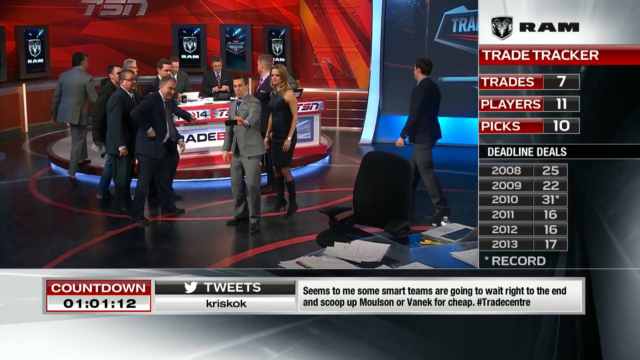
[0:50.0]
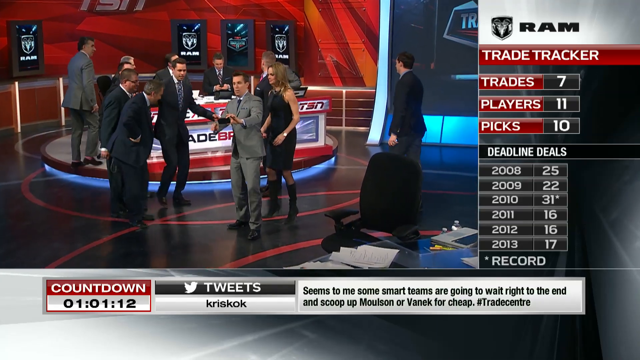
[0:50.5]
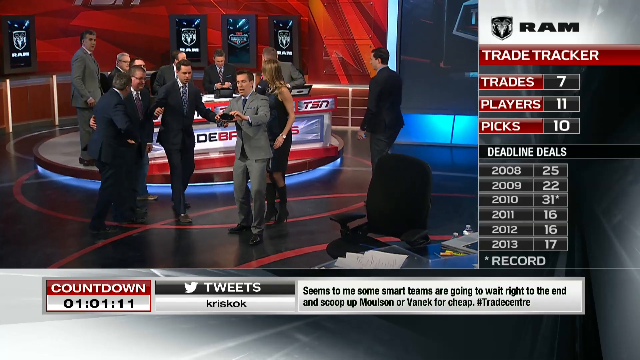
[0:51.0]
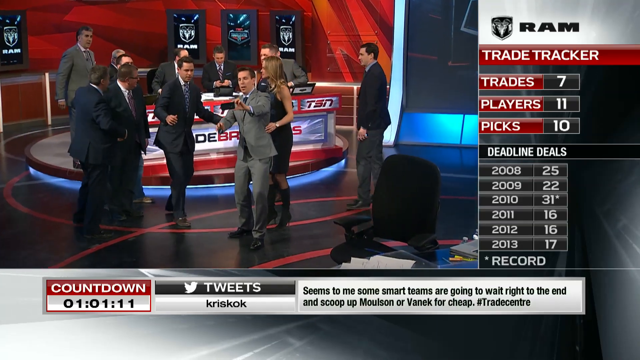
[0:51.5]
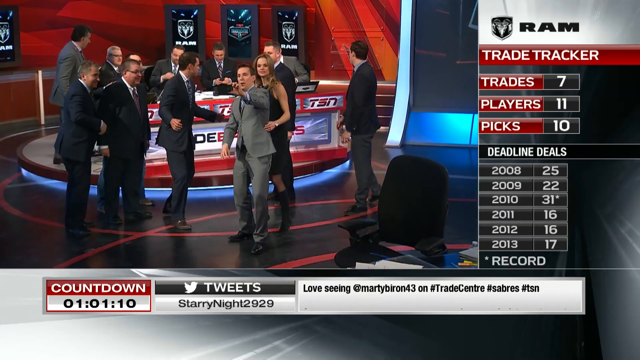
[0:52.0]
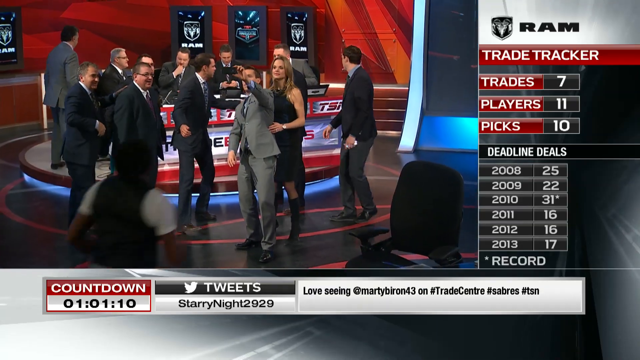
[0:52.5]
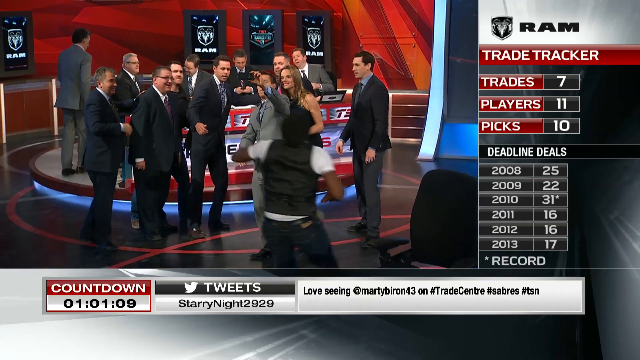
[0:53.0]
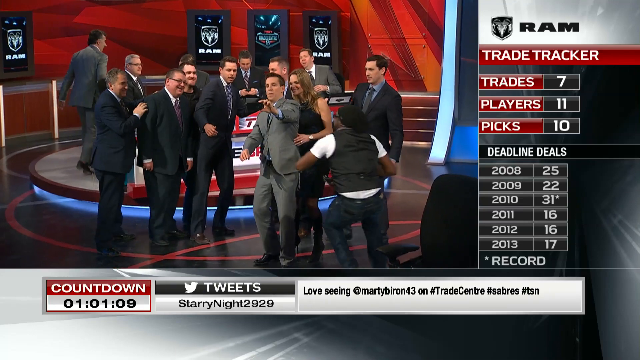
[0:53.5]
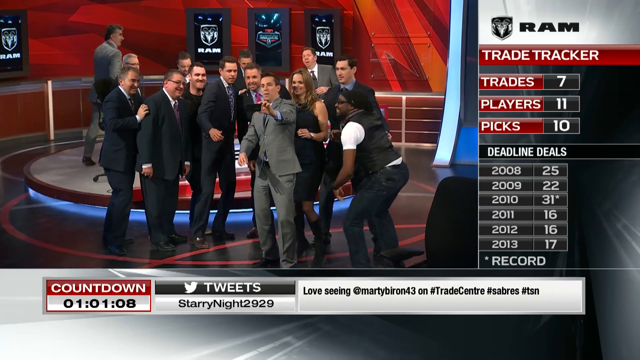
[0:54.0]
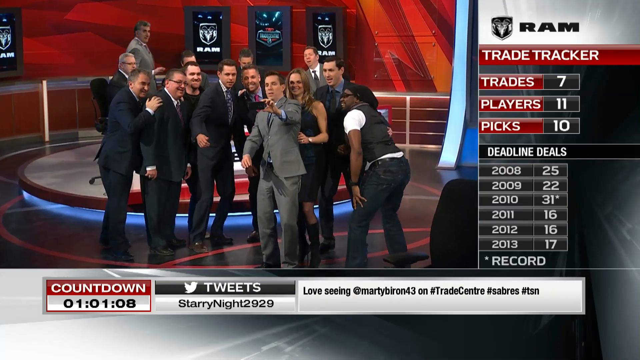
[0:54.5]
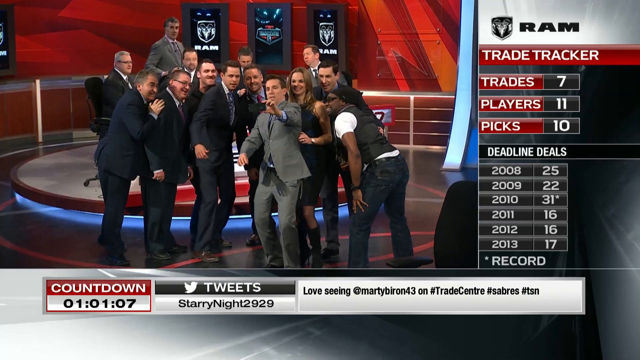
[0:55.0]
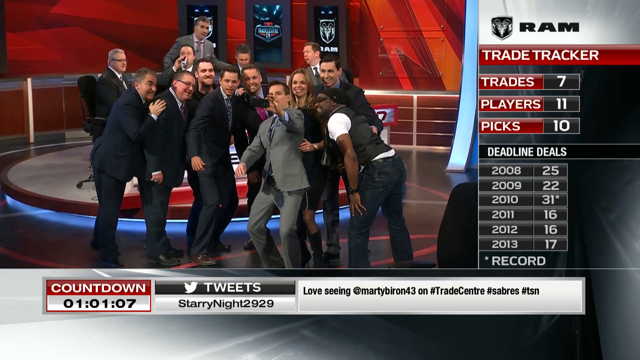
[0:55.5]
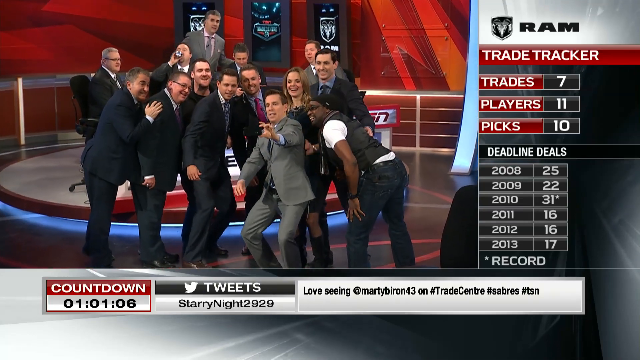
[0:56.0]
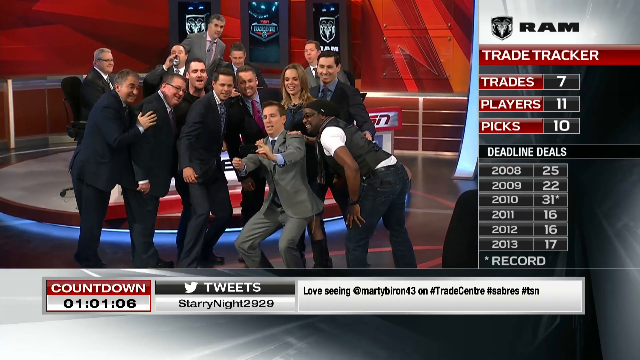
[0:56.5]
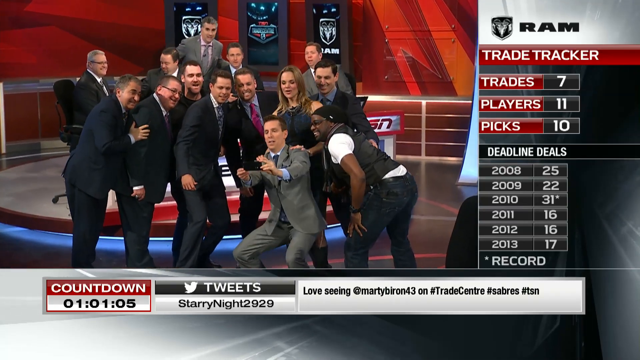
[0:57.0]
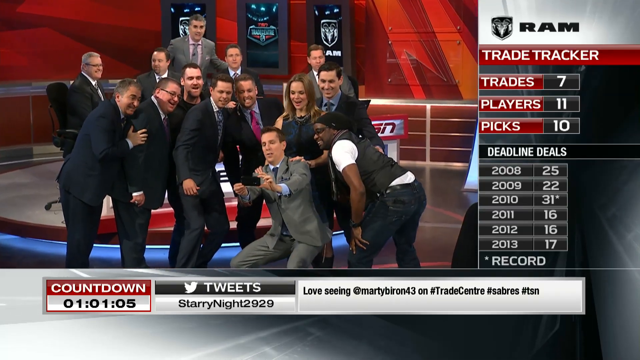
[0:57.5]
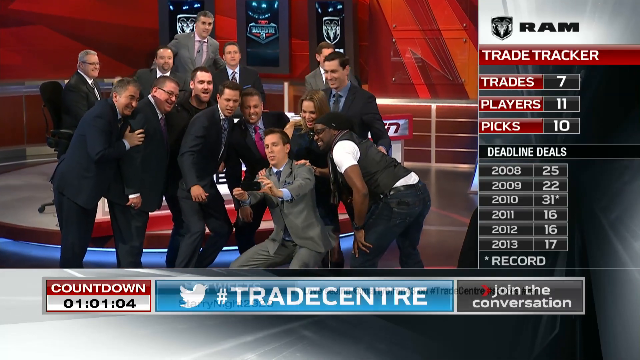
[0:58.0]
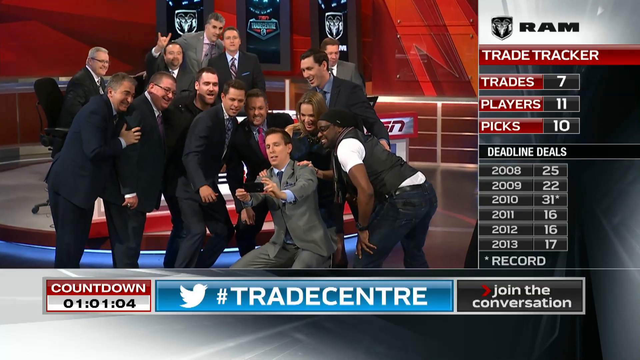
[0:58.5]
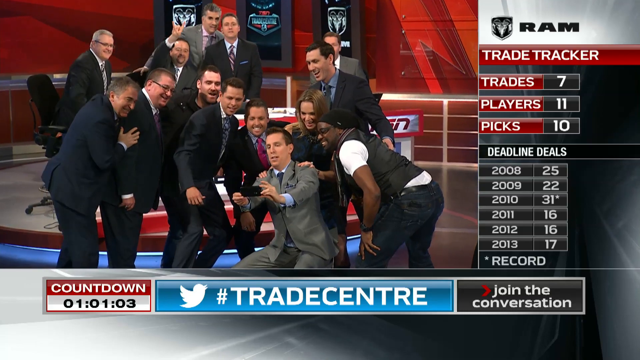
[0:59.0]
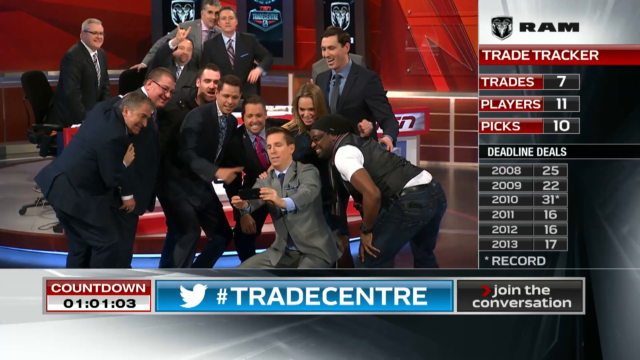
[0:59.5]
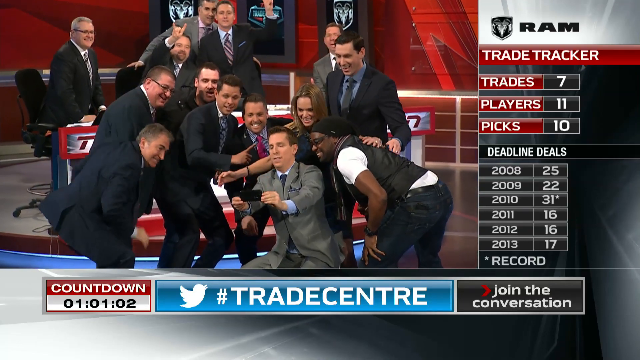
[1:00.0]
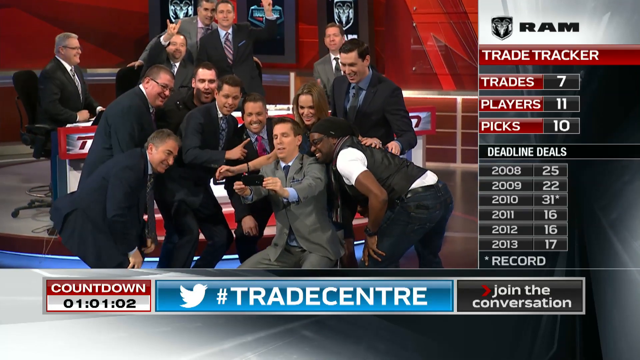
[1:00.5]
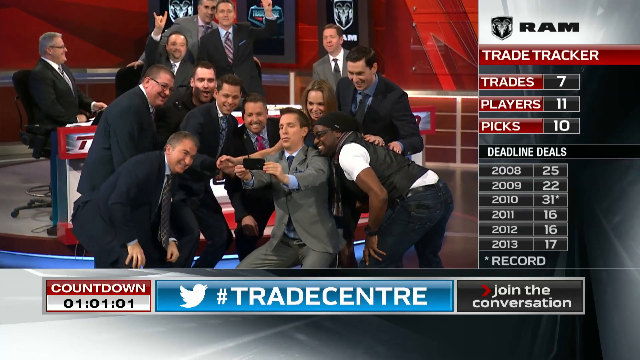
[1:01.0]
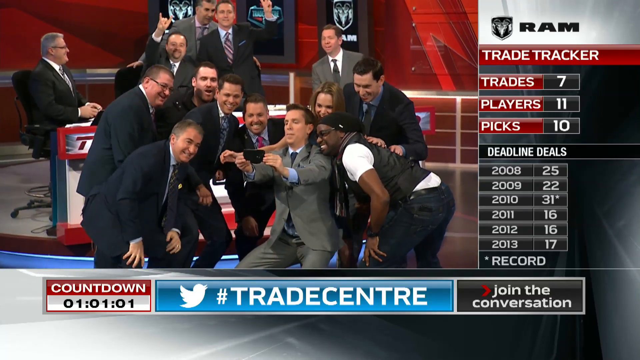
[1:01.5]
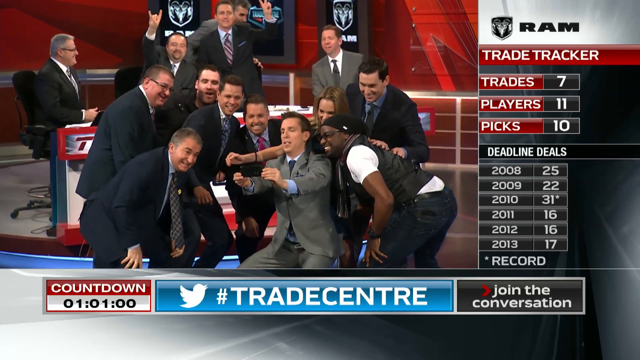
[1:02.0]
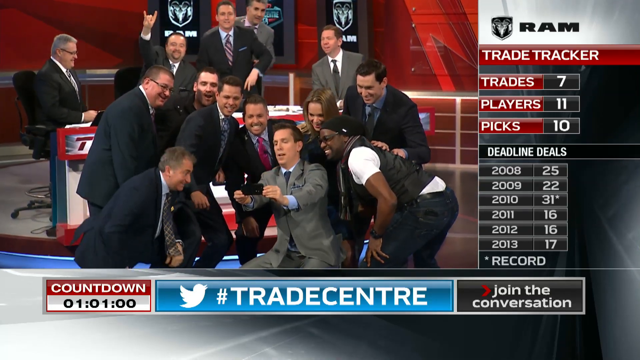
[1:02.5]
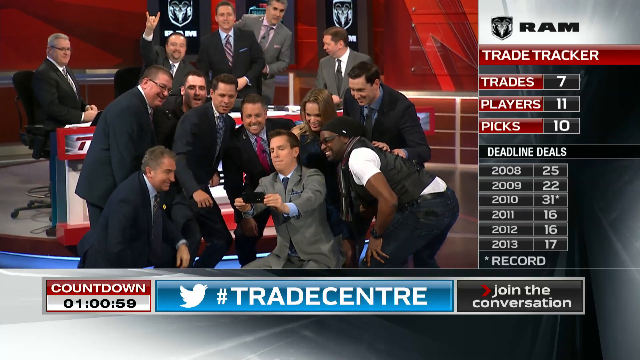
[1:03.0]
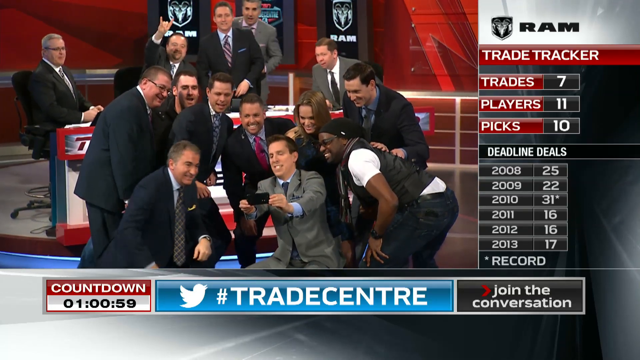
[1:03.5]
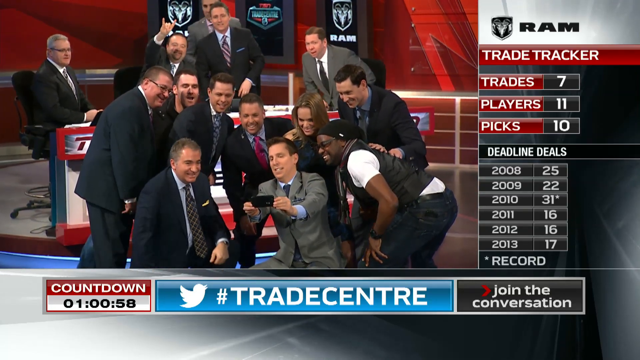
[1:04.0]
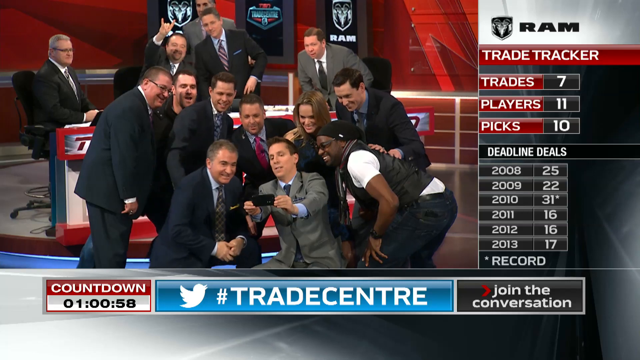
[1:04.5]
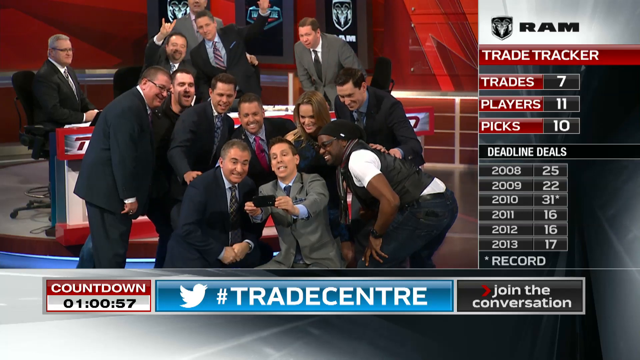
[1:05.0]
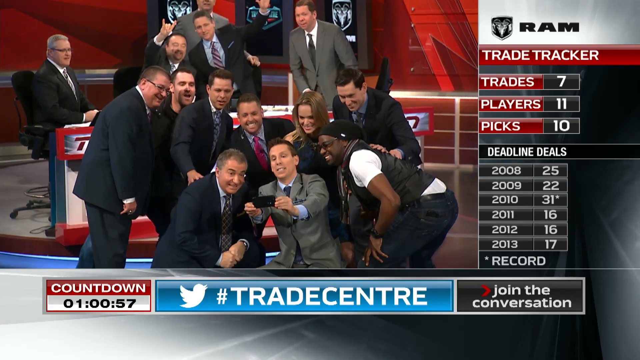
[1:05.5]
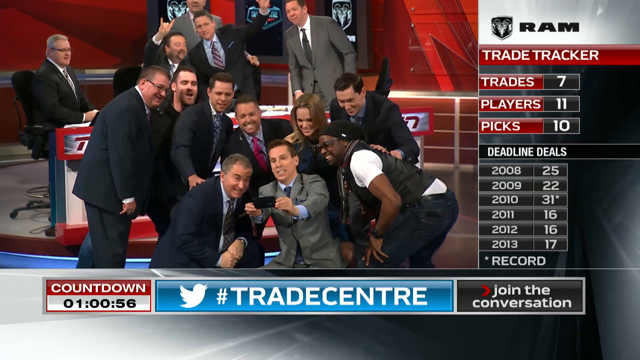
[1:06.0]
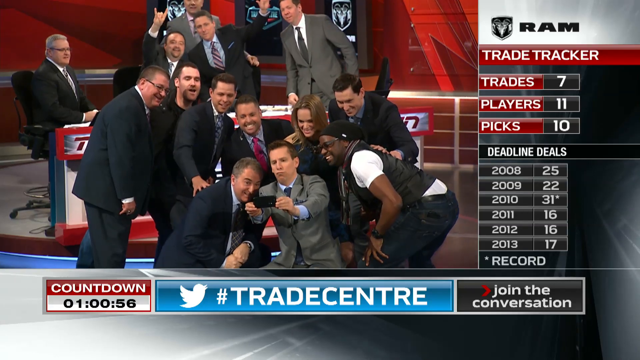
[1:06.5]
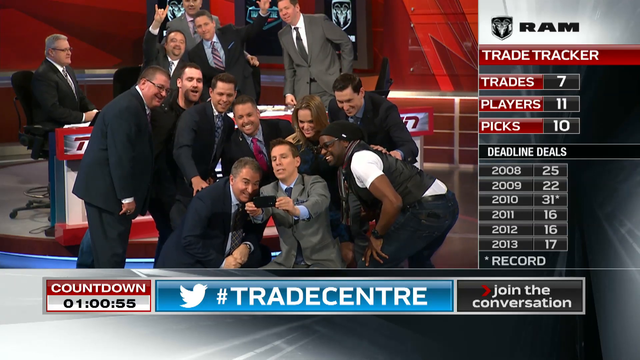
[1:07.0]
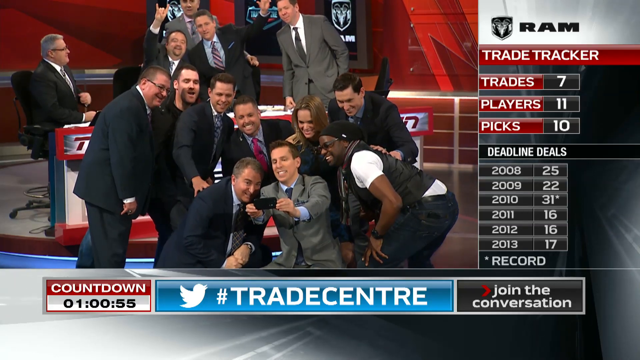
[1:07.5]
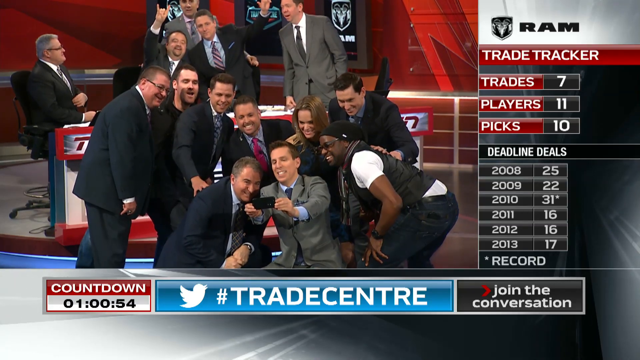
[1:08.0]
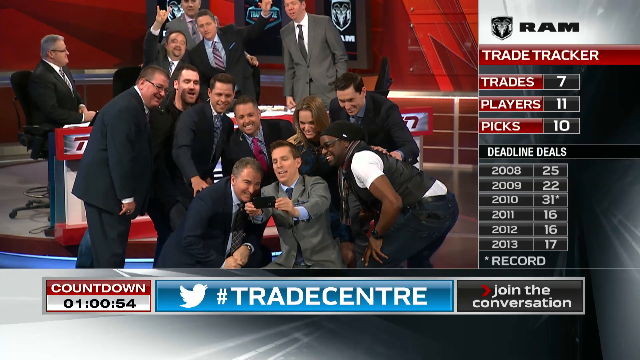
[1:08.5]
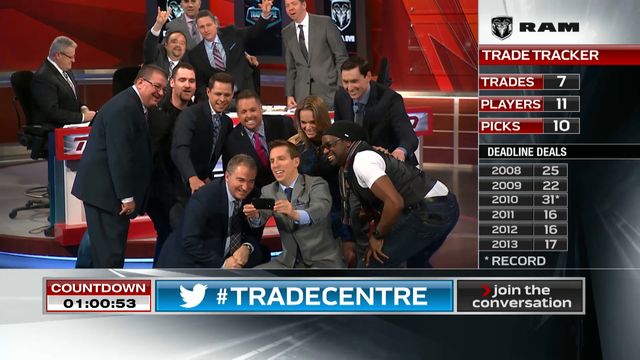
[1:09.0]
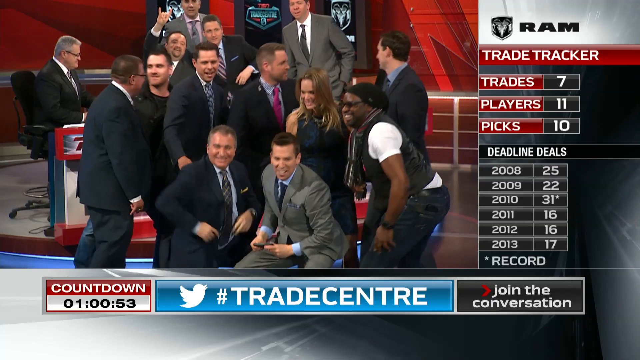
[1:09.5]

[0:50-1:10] During the newscast, all the people in the newsroom are gathered in the very center of the stage. The man in the gray suit leans down with a phone in front of him, getting ready to take a selfie of the entire crew, who stand around and behind him. Once he takes the picture, everybody stands up and begins walking away. In the upper right of the screen is the Ram logo, which would be Dodge Ram, with "Trade Tracker, Trades 7, Players 11, Picks 10" below it and "deadline deals" underneath that. A countdown clock in the lower left reads 1 hour, 1 minute and 12 seconds. A tweet in the lower right corner reads "Seems to me some smart teams are looking to wait right to the end and scoop up Boyson and Vanek for cheating."